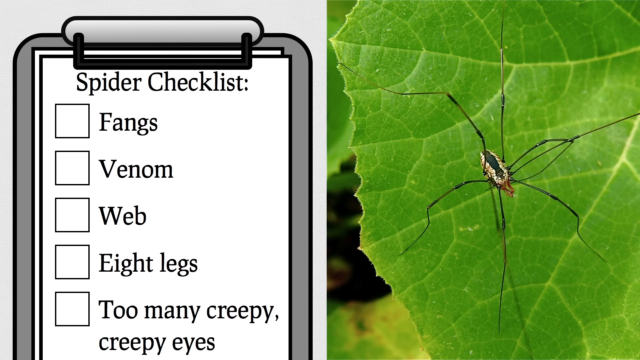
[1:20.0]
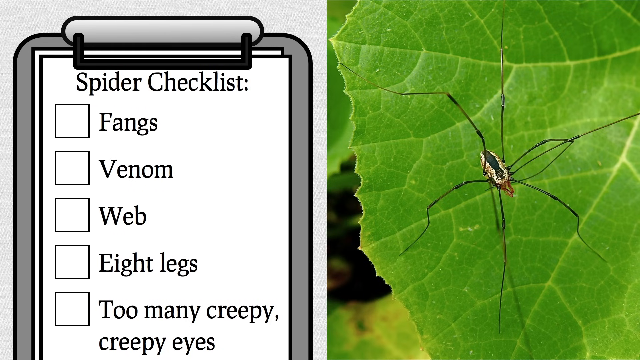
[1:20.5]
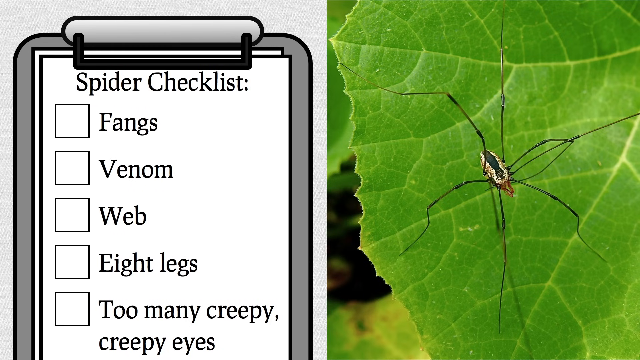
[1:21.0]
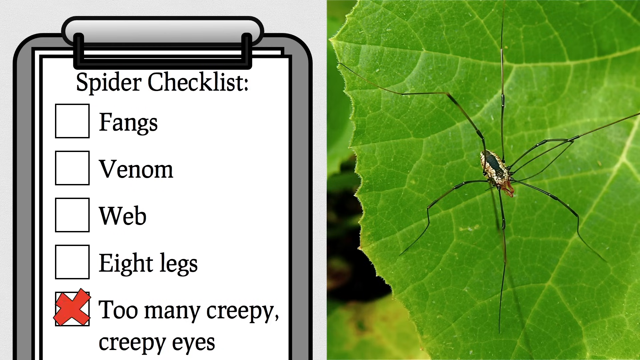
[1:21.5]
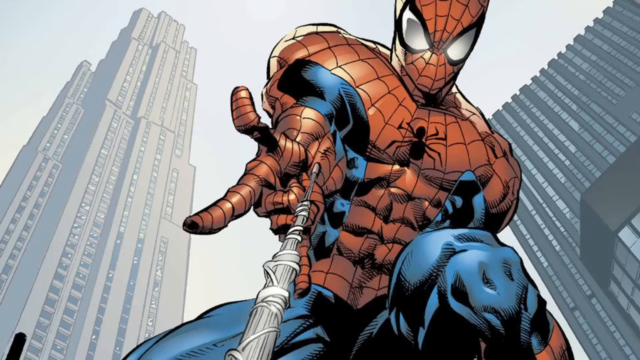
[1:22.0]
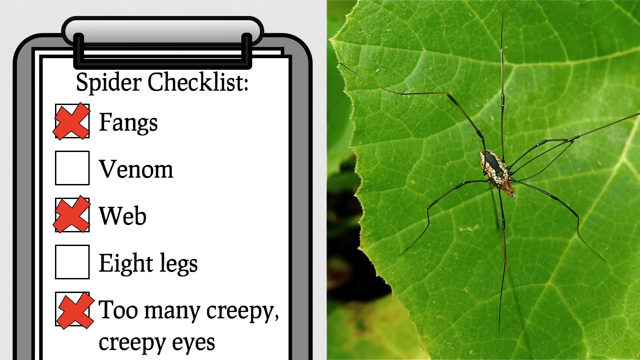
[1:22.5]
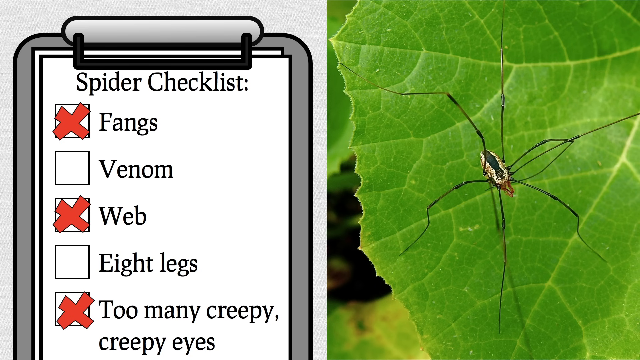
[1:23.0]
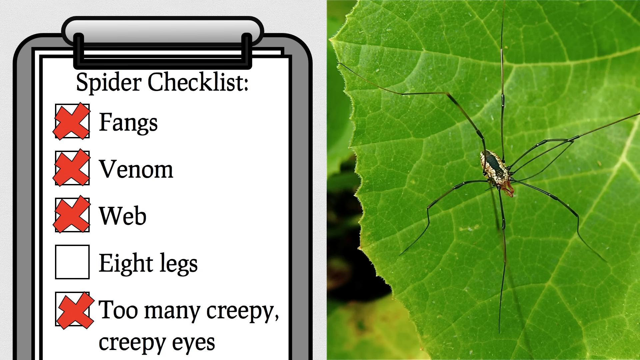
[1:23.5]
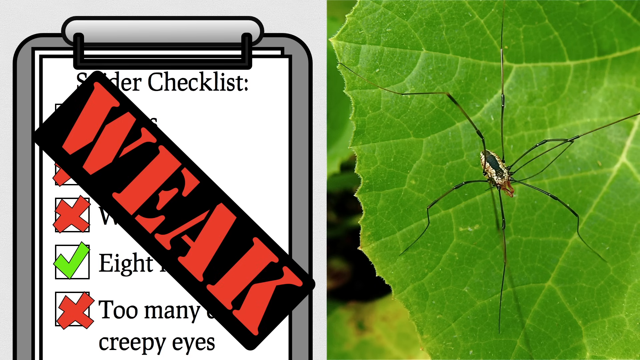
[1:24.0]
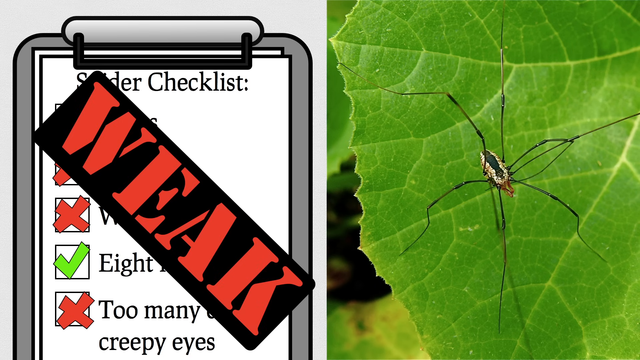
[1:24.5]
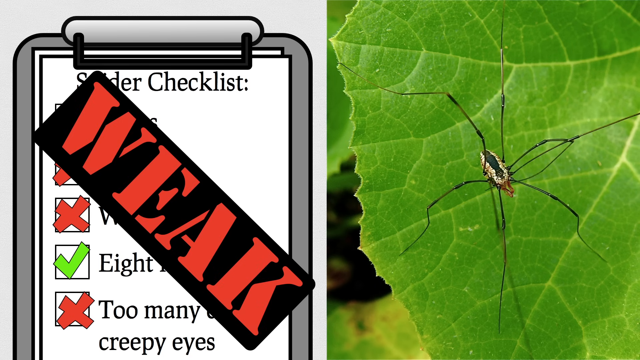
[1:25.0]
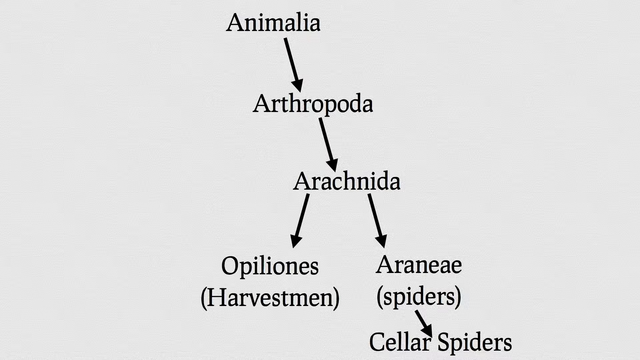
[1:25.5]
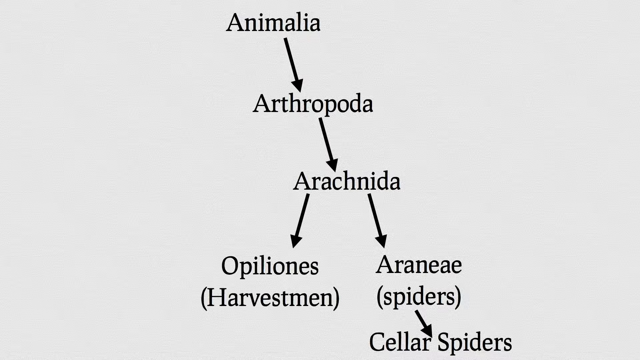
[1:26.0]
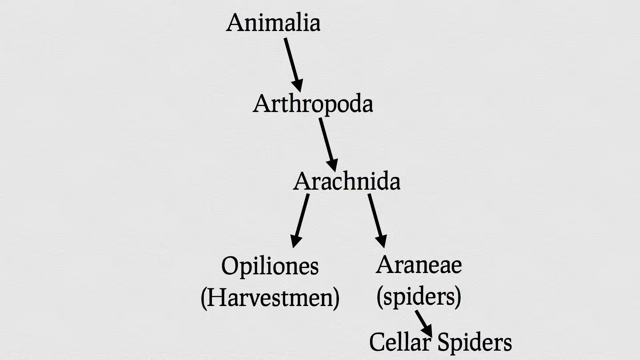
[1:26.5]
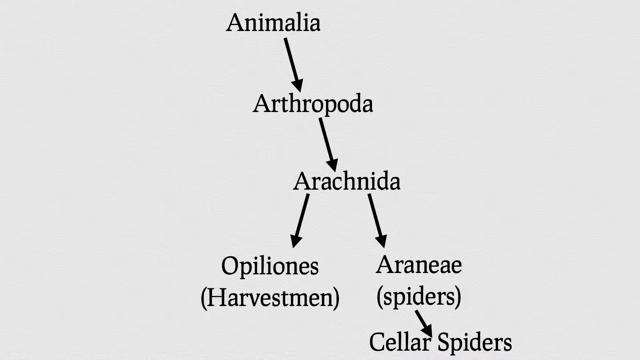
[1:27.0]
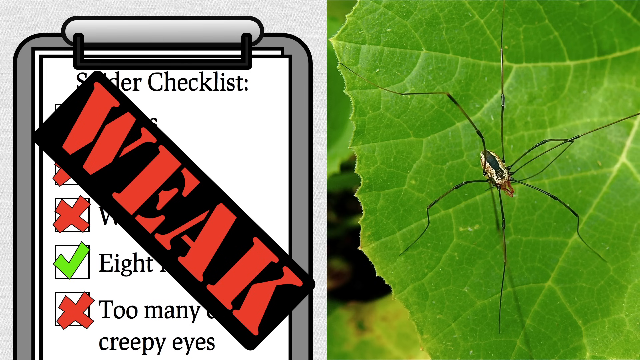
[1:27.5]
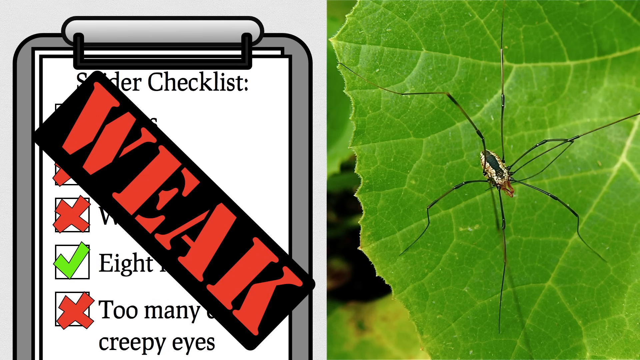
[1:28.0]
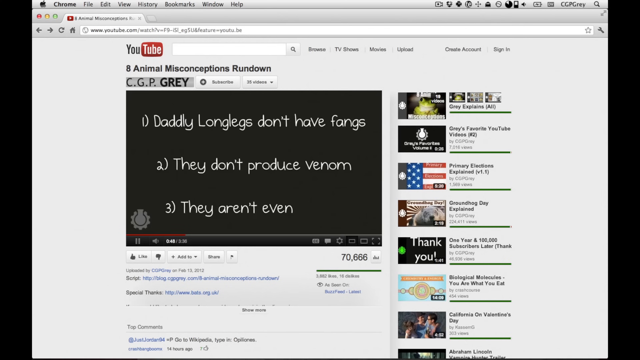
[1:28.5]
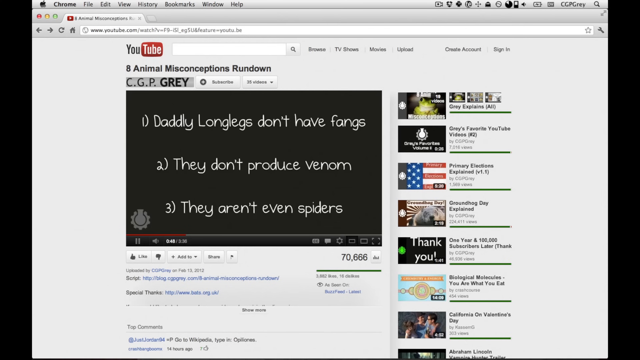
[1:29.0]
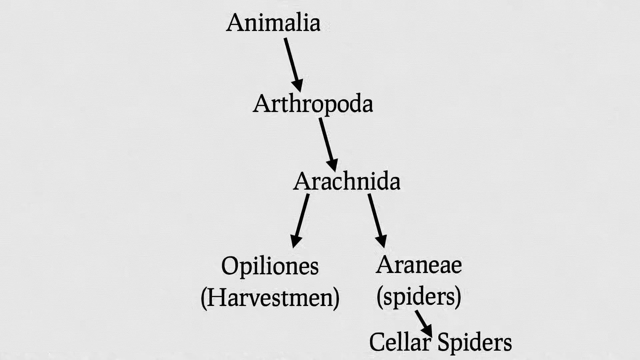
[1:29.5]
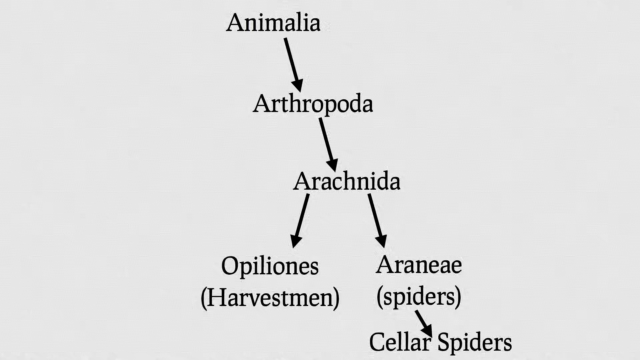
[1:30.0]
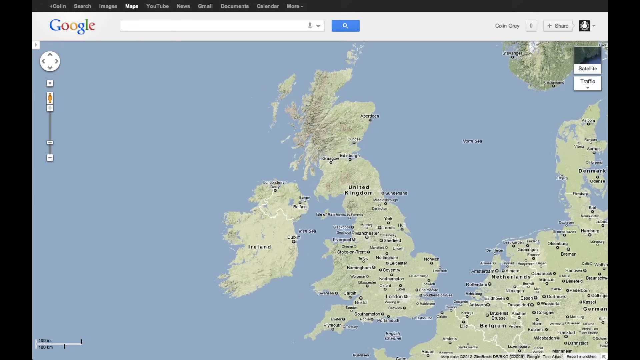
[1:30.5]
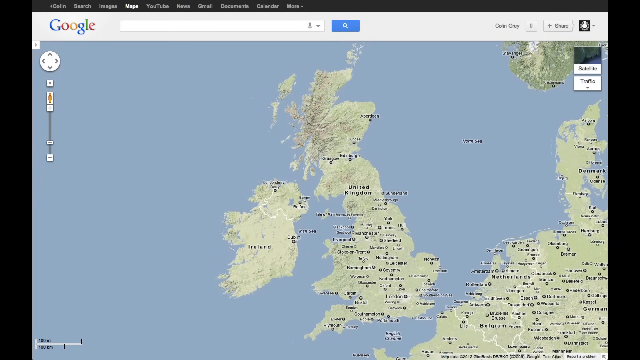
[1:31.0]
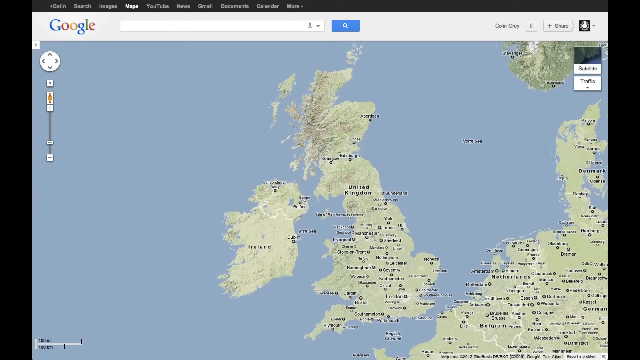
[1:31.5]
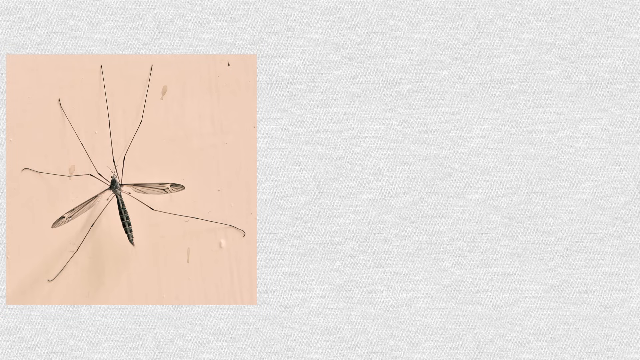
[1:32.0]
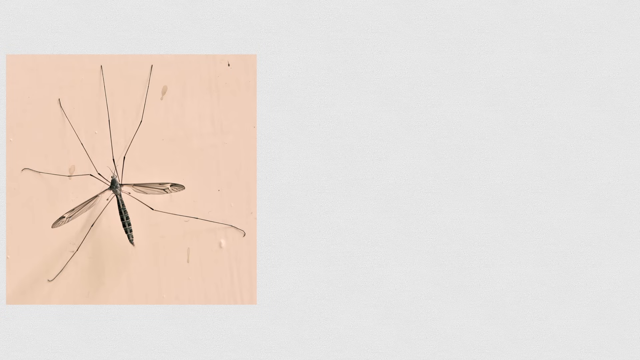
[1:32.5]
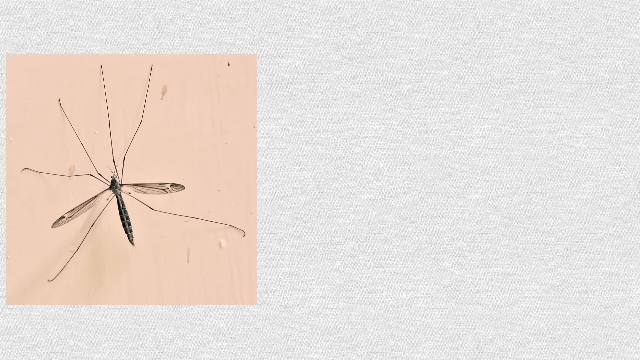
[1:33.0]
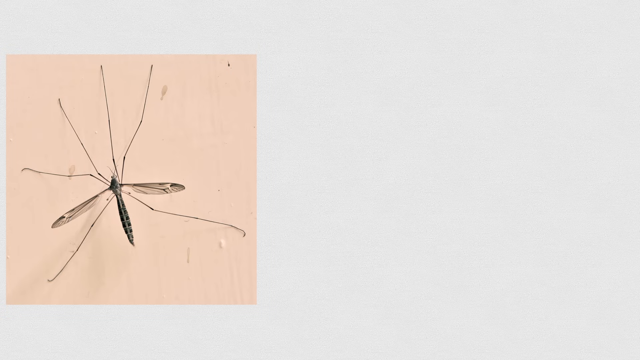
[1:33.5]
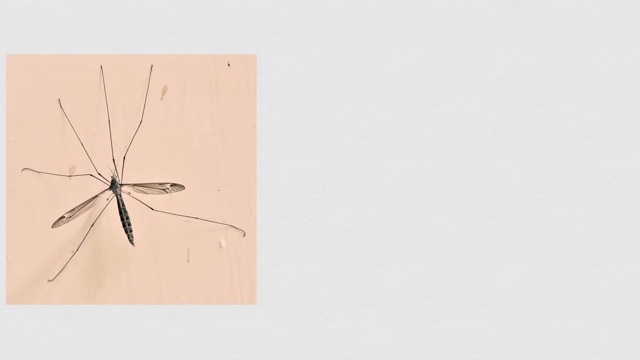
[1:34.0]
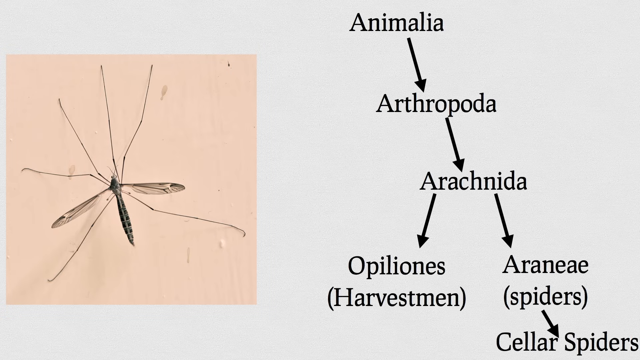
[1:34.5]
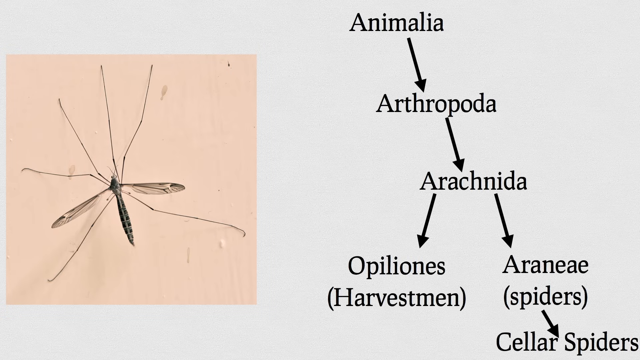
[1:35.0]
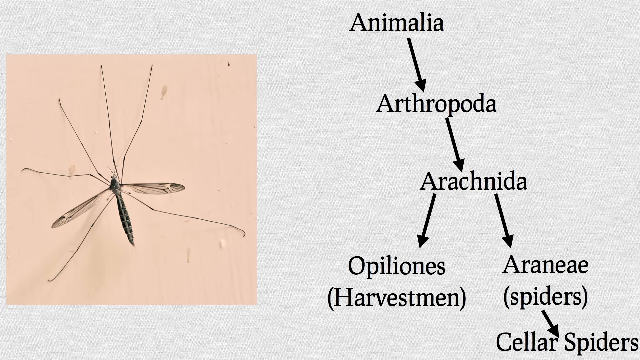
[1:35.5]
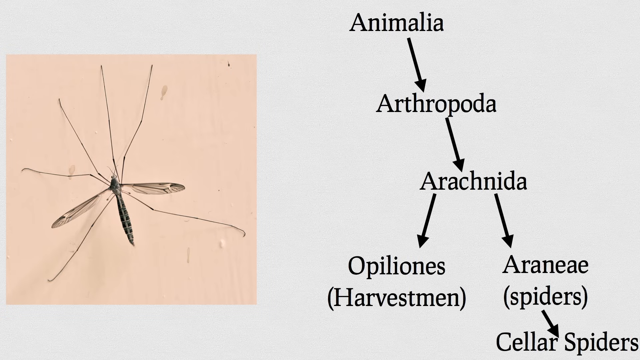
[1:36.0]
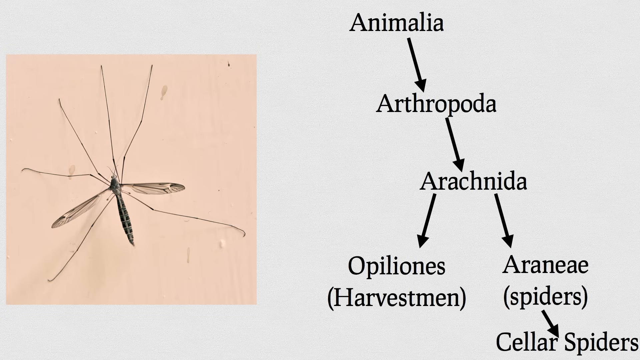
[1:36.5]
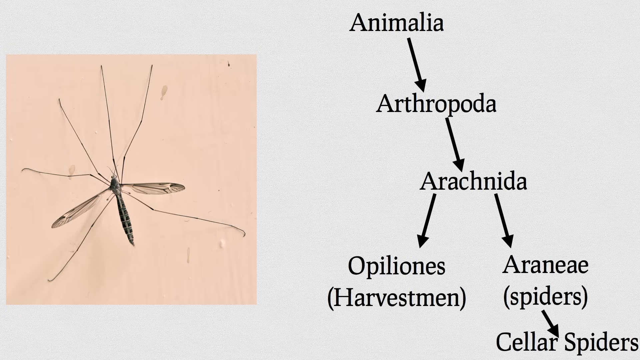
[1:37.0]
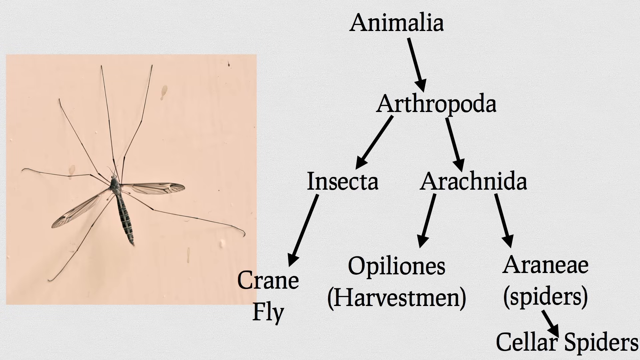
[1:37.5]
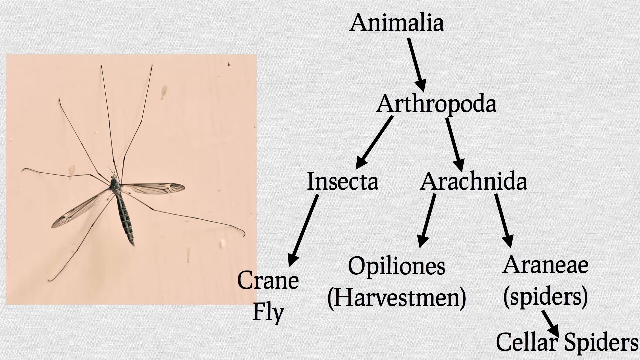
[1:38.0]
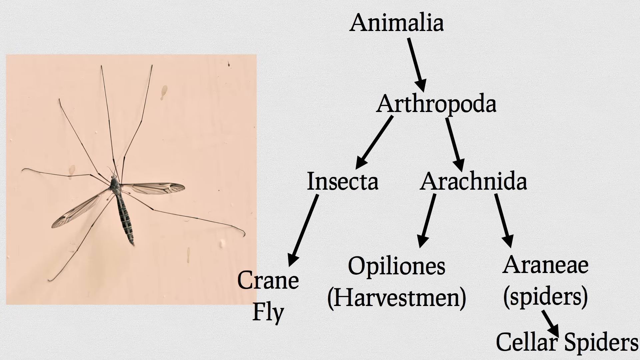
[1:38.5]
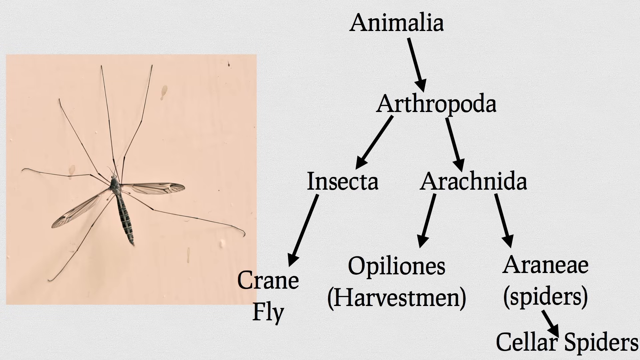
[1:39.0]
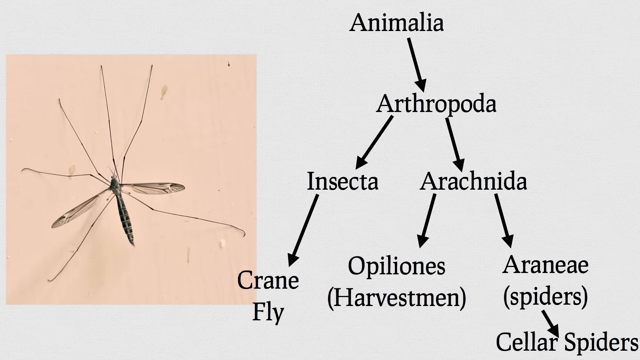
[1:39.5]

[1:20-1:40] An X is put on "too many, too creepy", and the video transitions to a comic-book picture of Spider-Man in his blue and red attire shooting a web from his hand in the city. It returns to the latest animal on the green leaf with the checklist, where crosses show that it does not have fangs, does not have a web, and is not too many too creepy; it also does not have venom, but it does have eight legs, so it fails the spider checklist, and a black and red banner saying "weak" comes across the checklist. The video returns to the Animalia classifications, where a new subgroup called "Opiliones" or "Harvestmen" branches under Arachnidia. It goes back to the photo of the latest animal, then to the YouTube page with the animal misconceptions rundown saying "daddy long-legs don't have fangs" and the other points. Next is a picture of the UK in green and blue, with another animal on the left-hand side that seems to resemble some sort of mosquito, with a long body, six legs and large wings coming from either side. On the title page, the diagram then branches under Arthropoda to Insecta, which branches out to this animal, identified as a crane fly.